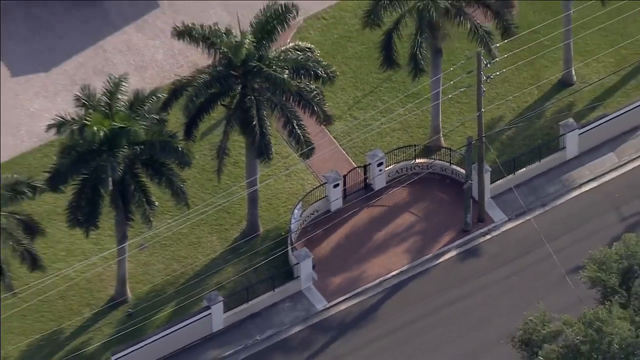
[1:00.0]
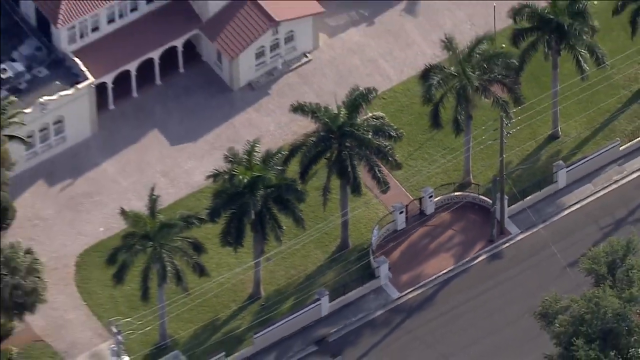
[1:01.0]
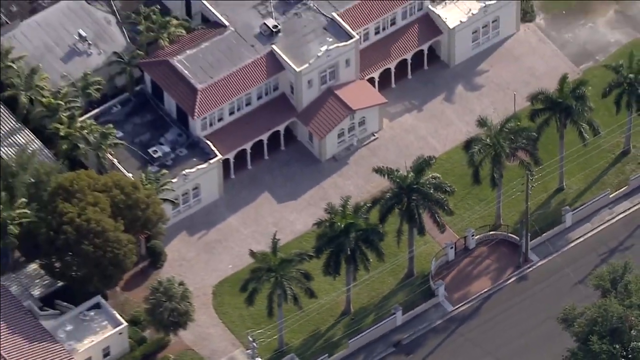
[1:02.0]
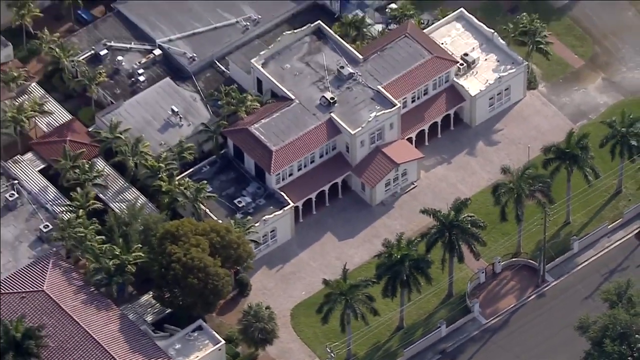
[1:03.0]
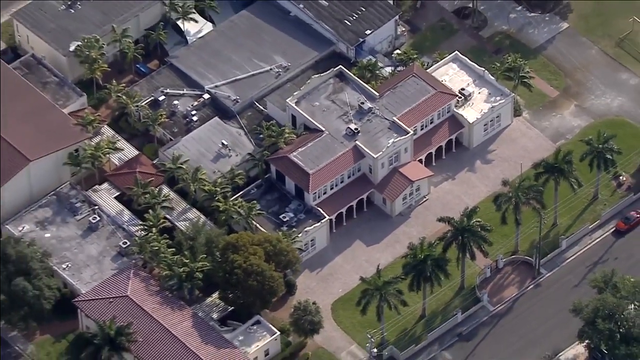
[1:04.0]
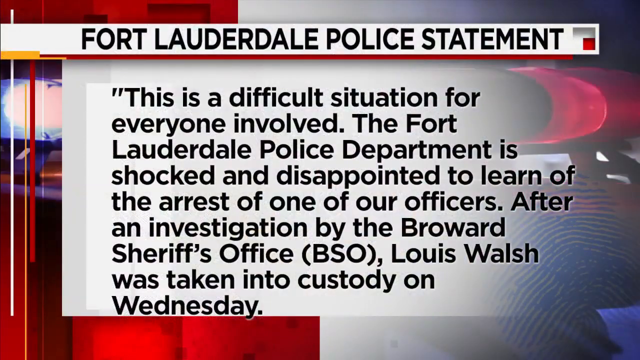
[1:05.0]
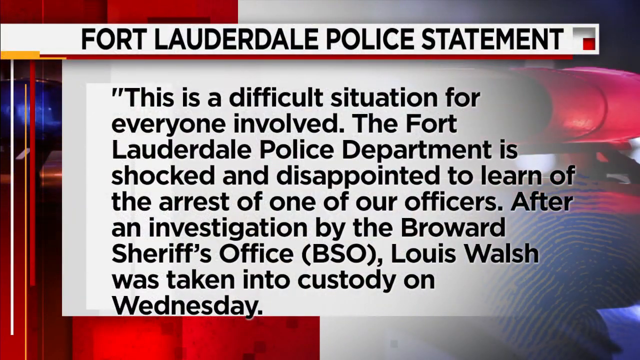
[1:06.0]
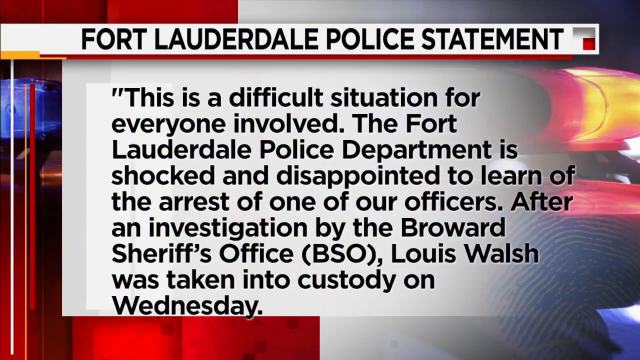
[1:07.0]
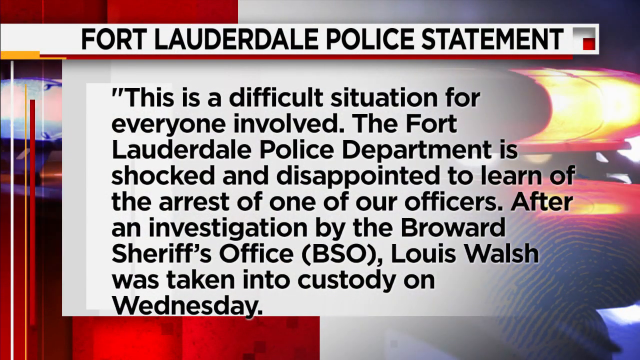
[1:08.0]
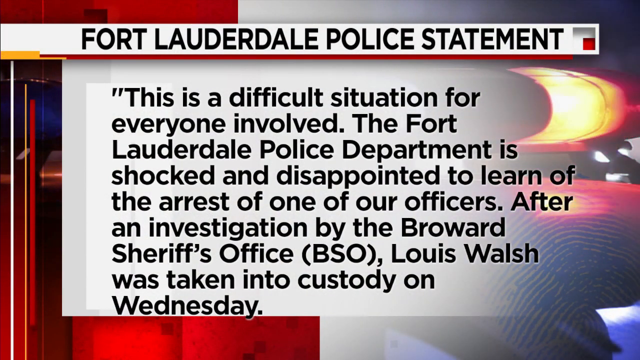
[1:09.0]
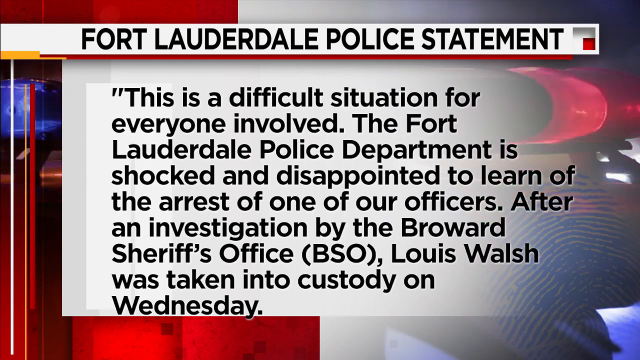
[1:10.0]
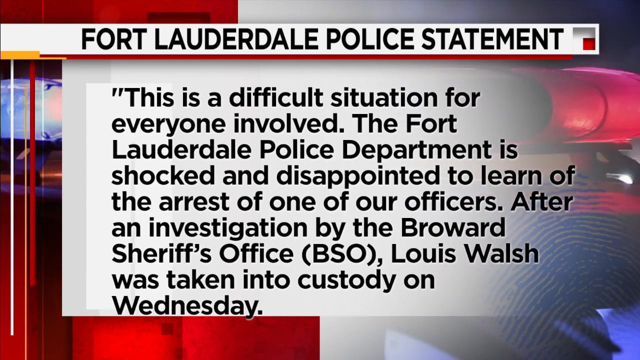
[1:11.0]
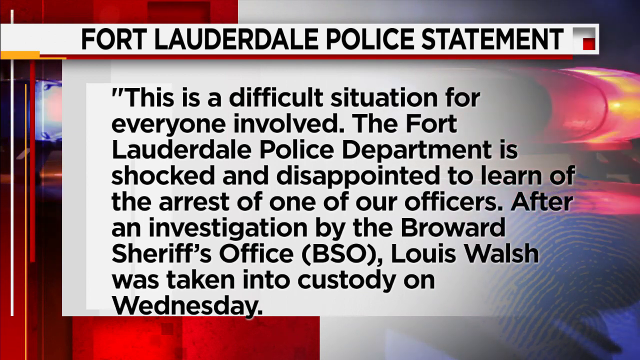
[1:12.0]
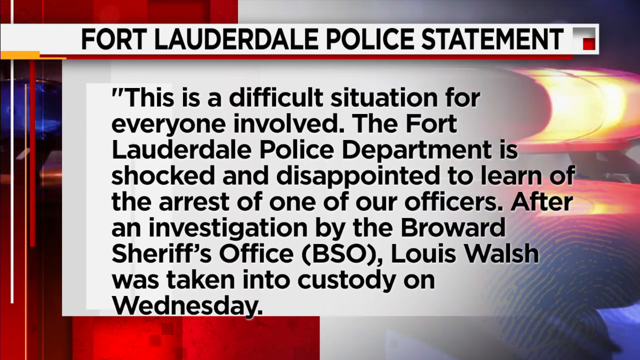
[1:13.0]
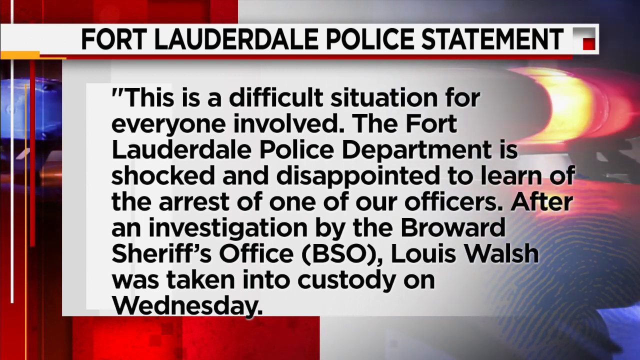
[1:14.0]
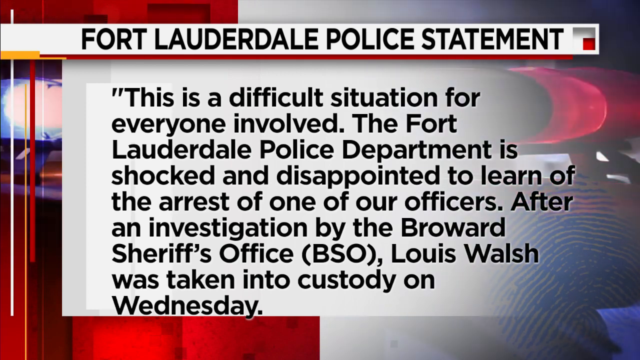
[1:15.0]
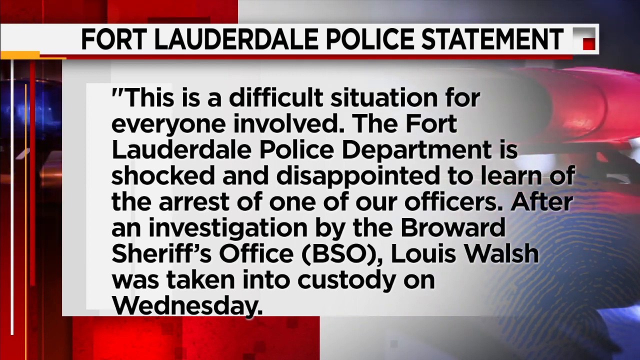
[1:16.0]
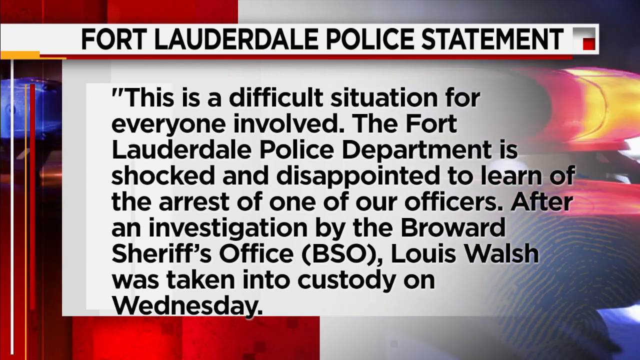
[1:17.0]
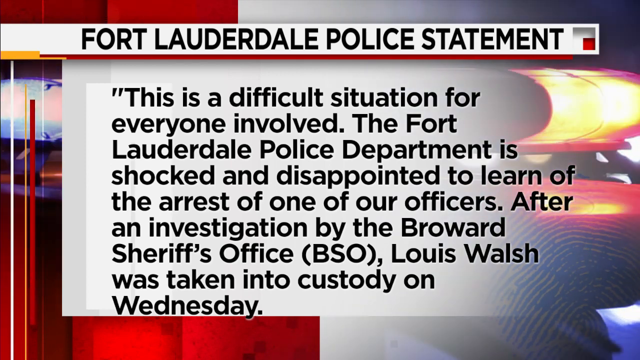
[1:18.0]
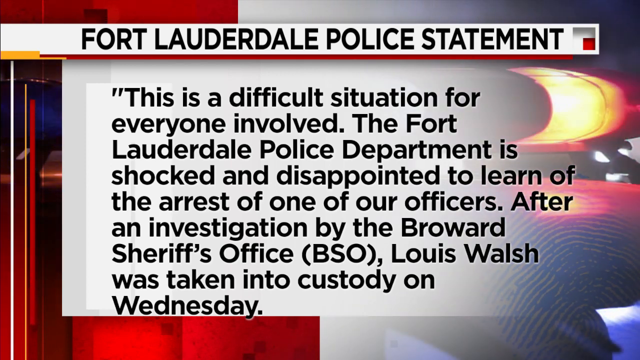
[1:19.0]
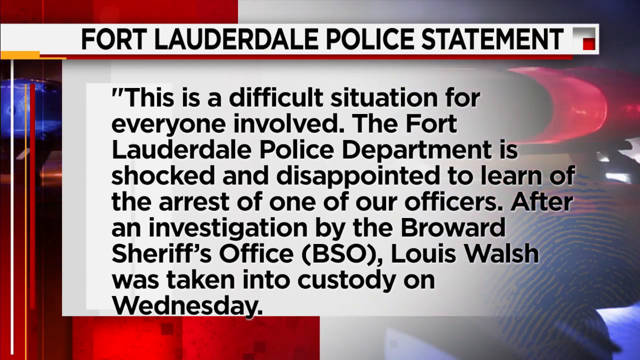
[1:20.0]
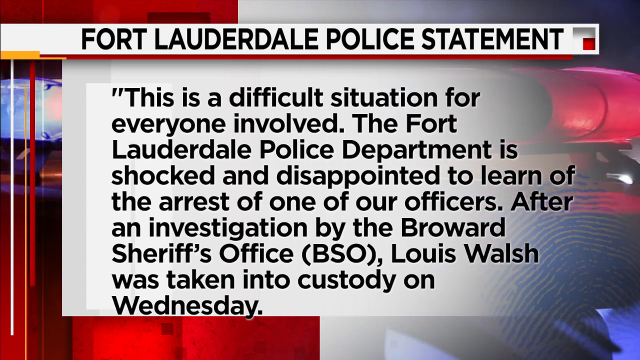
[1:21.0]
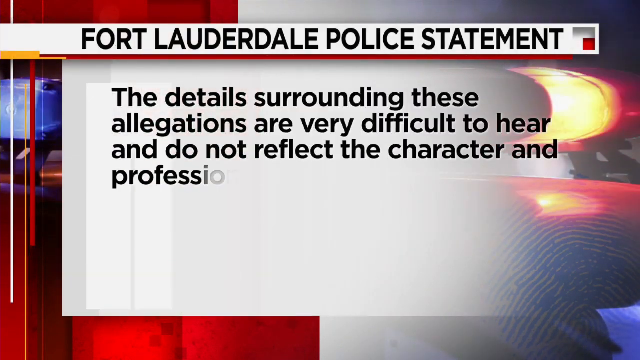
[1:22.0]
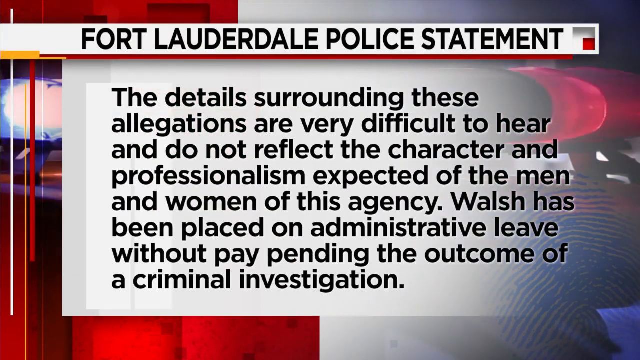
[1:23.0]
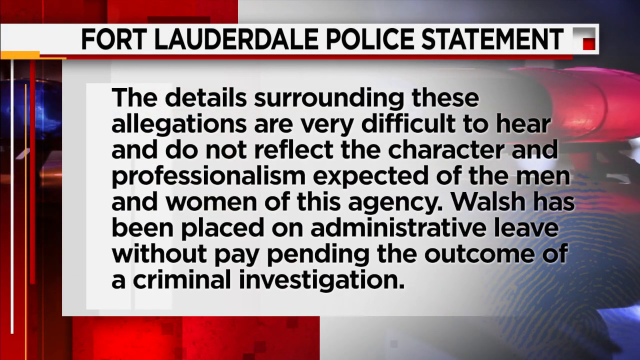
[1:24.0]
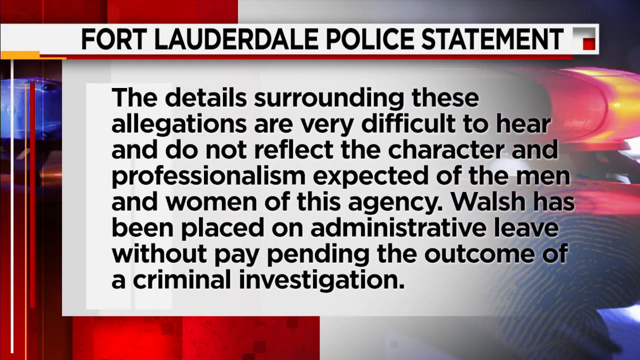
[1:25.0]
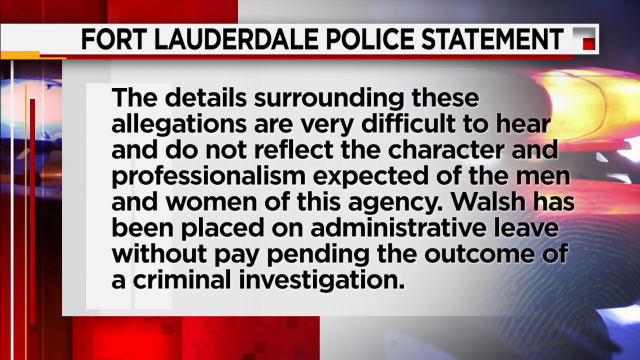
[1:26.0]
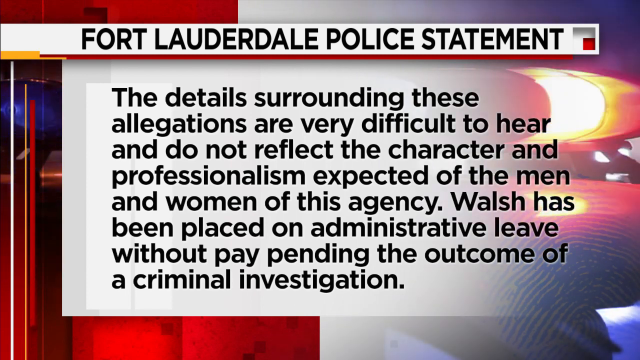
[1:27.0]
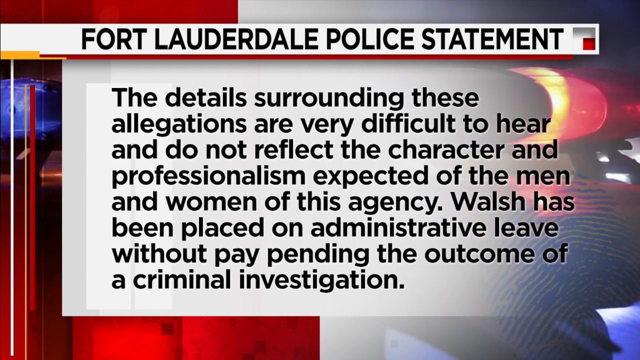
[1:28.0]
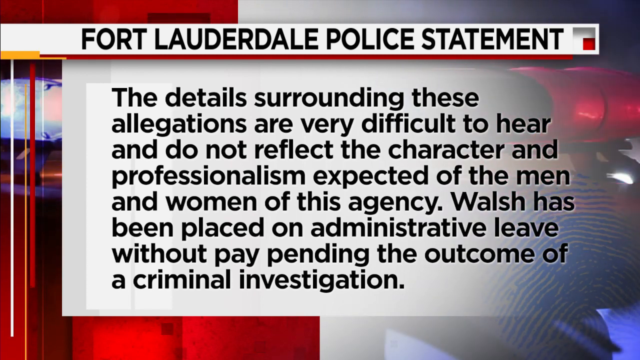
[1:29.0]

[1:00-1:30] The next message from the Fort Lauderdale police reads: "The details surrounding these allegations are very difficult to hear and do not reflect the character and professionalism expected of the men and women of this agency."